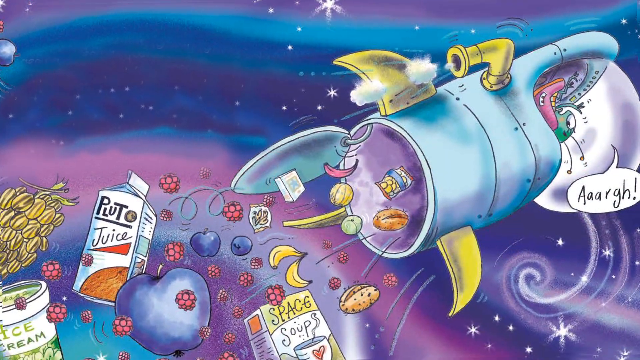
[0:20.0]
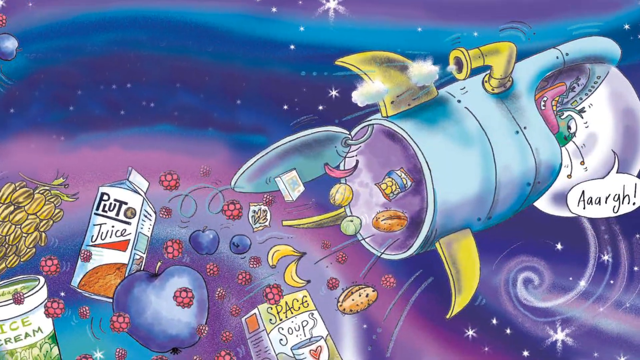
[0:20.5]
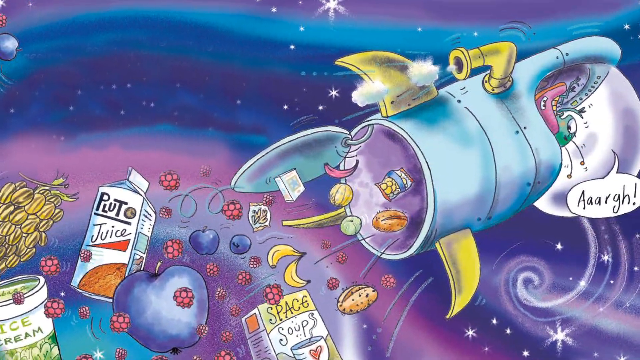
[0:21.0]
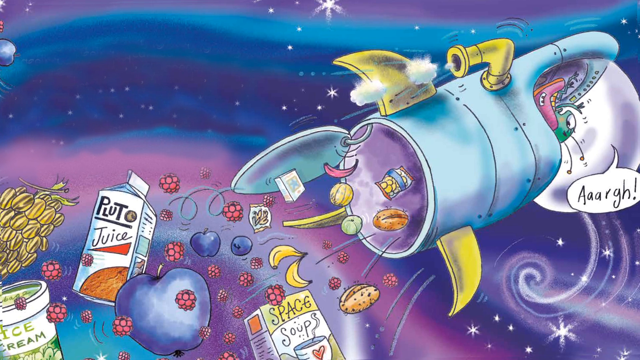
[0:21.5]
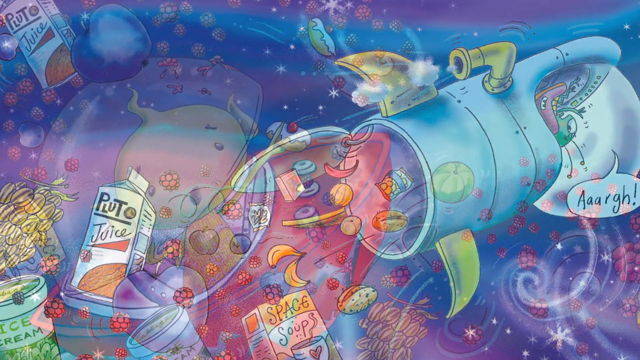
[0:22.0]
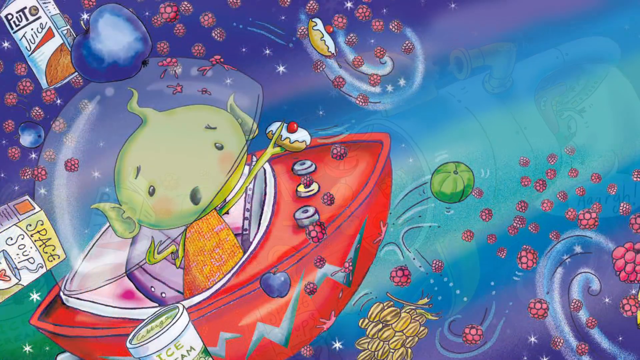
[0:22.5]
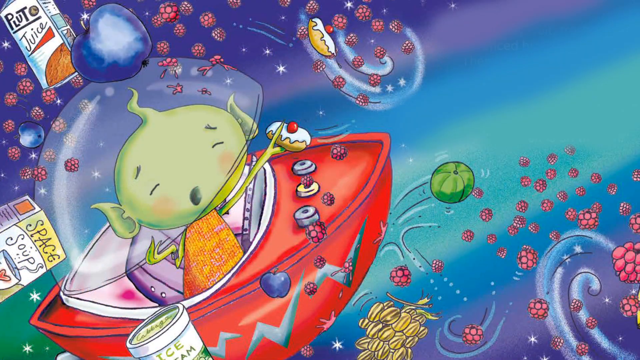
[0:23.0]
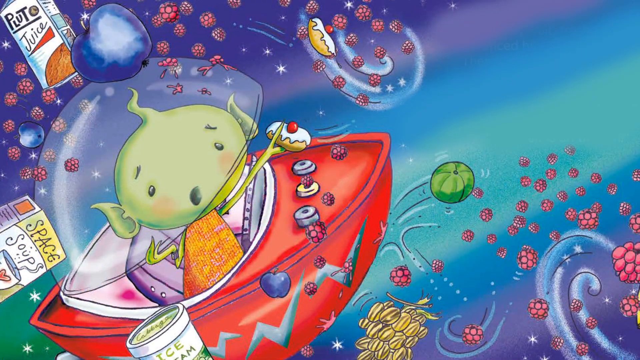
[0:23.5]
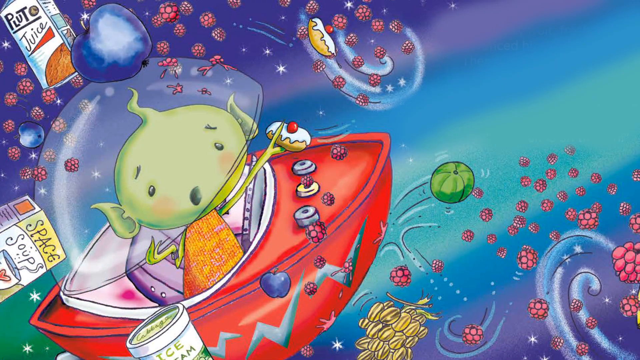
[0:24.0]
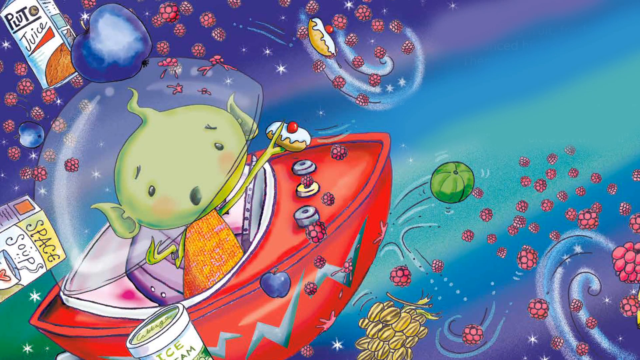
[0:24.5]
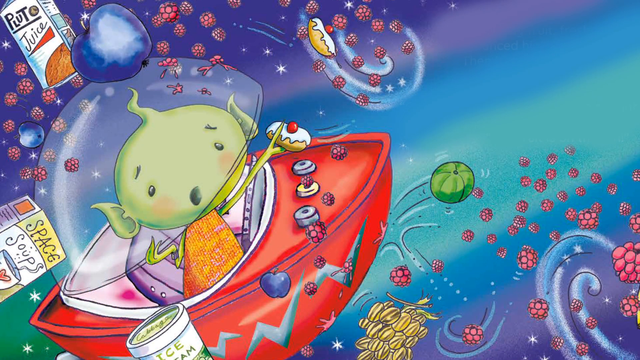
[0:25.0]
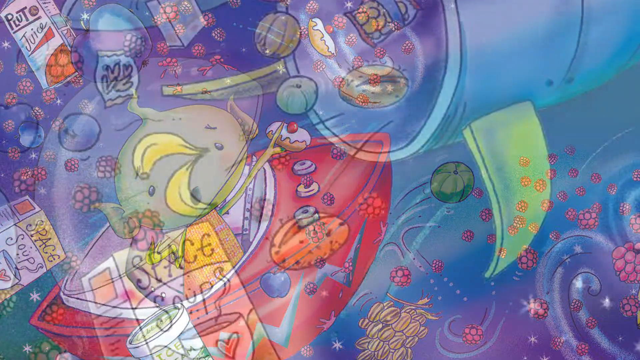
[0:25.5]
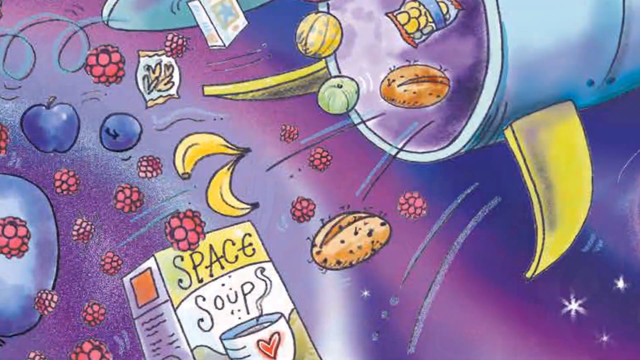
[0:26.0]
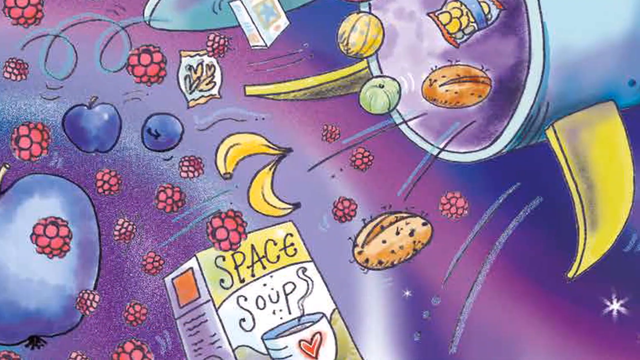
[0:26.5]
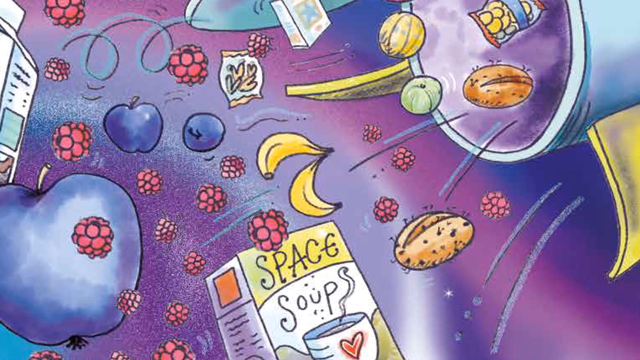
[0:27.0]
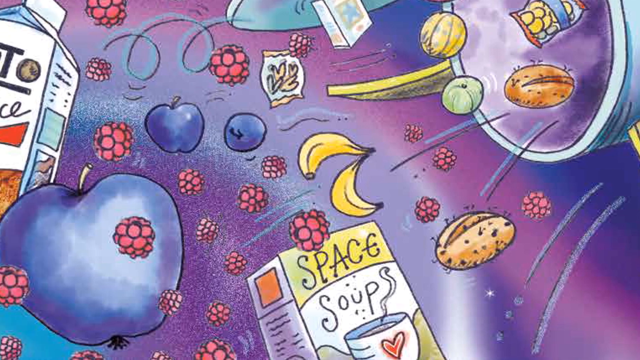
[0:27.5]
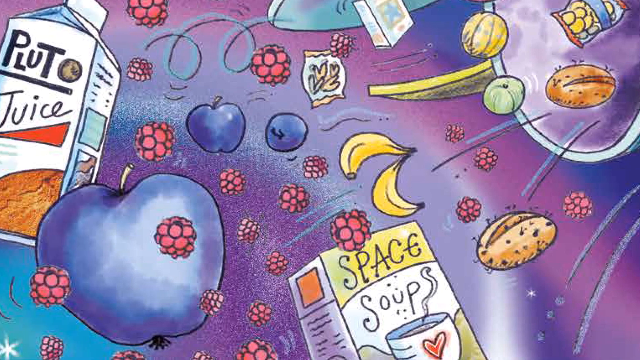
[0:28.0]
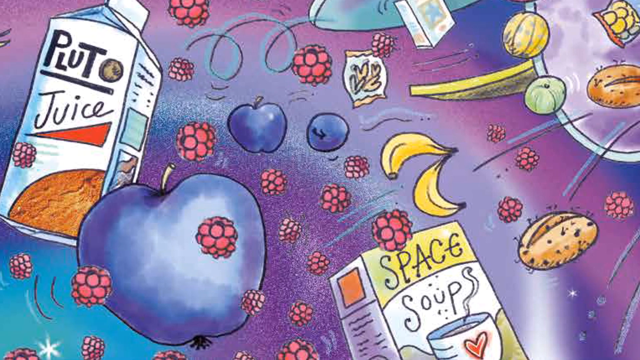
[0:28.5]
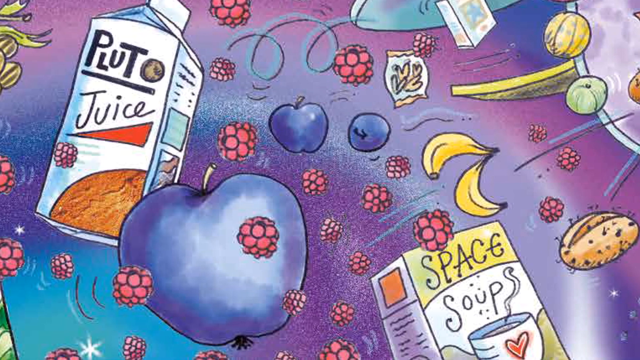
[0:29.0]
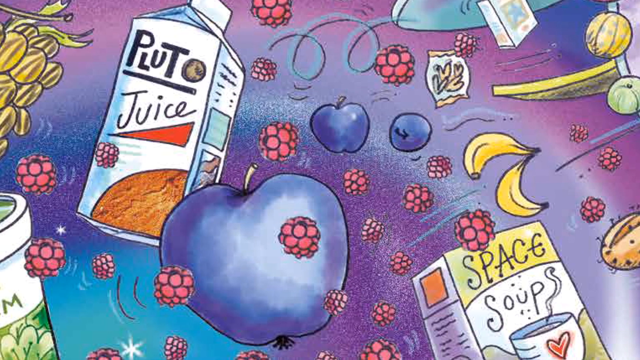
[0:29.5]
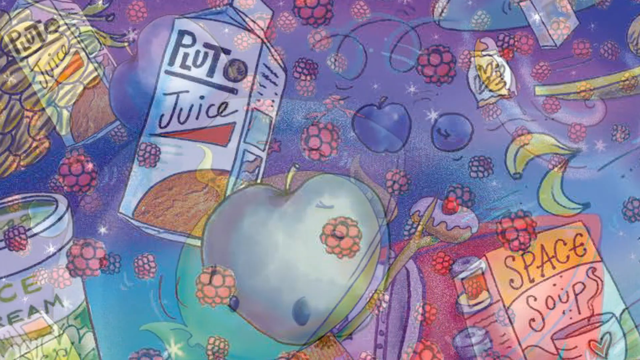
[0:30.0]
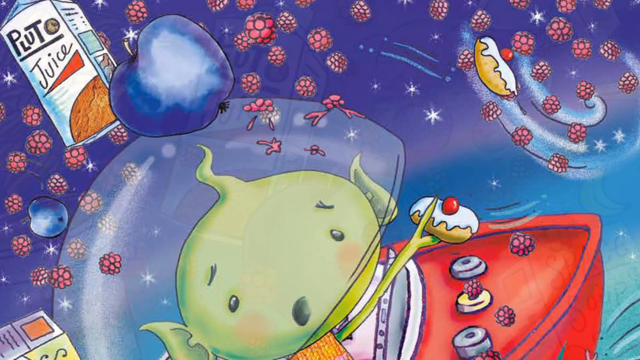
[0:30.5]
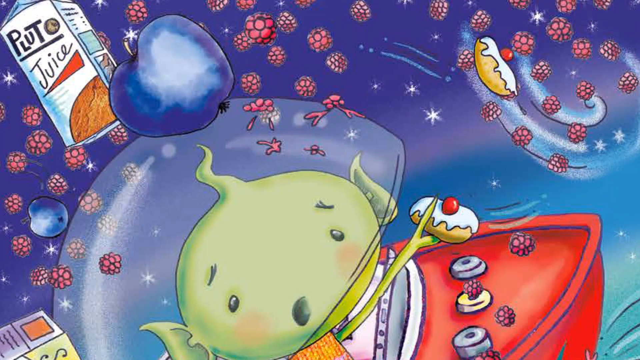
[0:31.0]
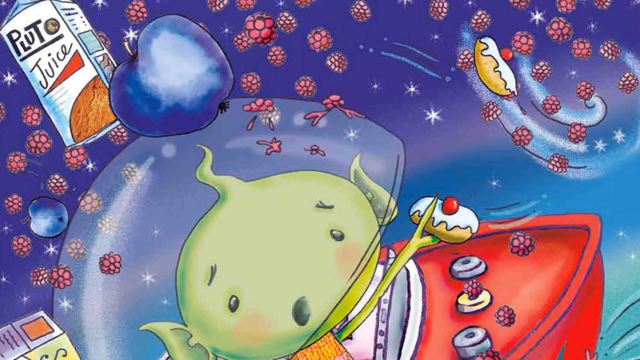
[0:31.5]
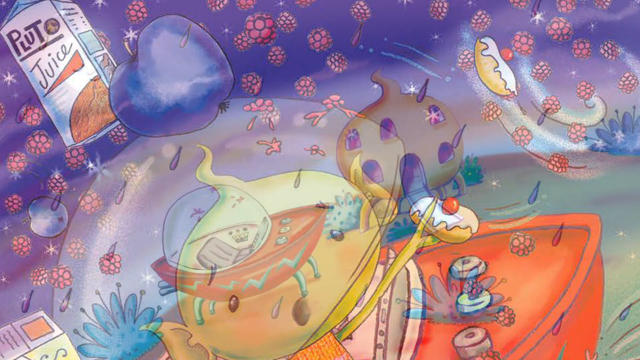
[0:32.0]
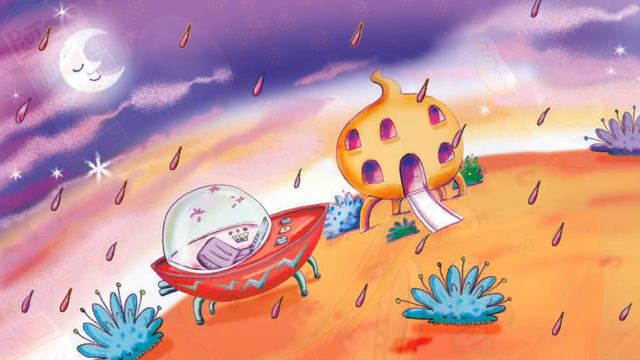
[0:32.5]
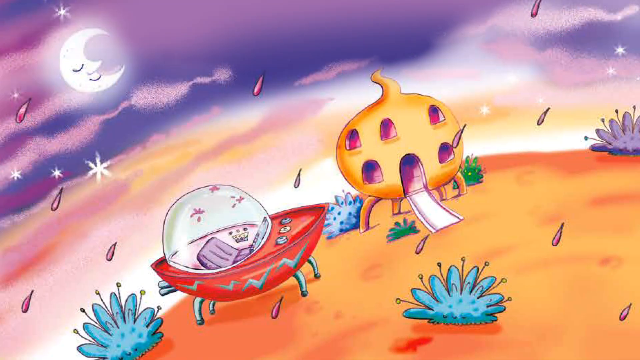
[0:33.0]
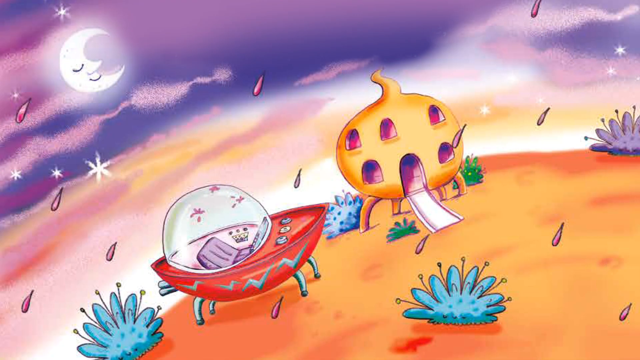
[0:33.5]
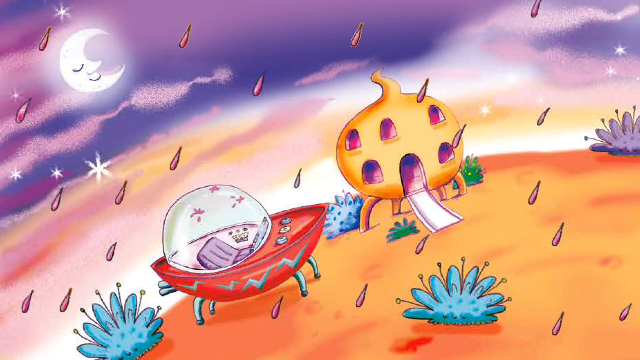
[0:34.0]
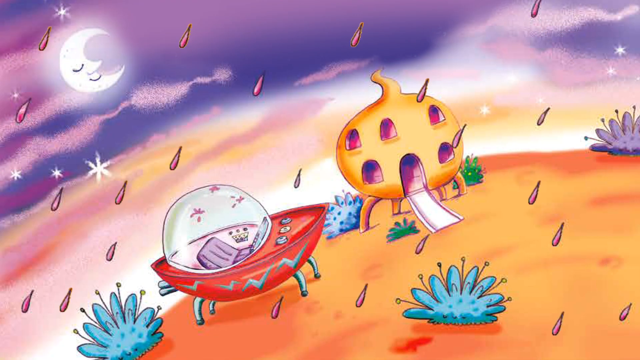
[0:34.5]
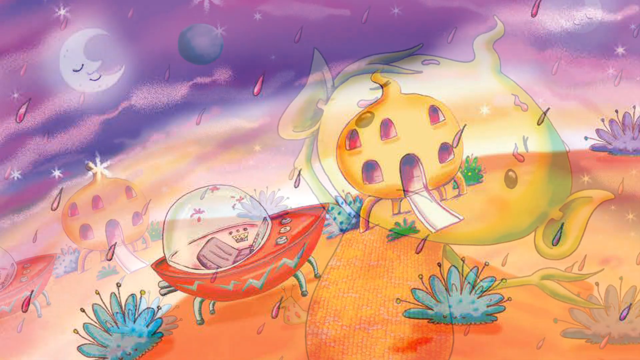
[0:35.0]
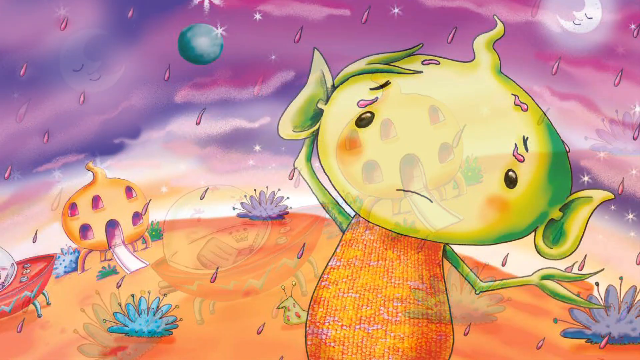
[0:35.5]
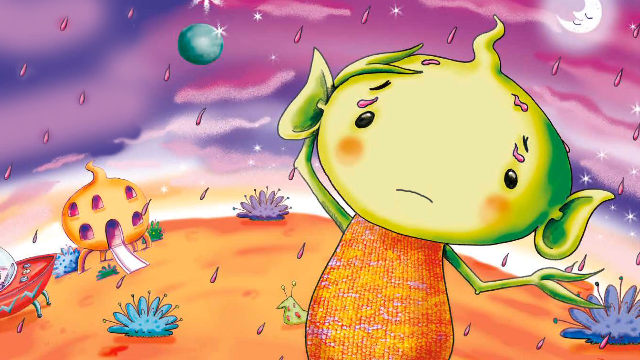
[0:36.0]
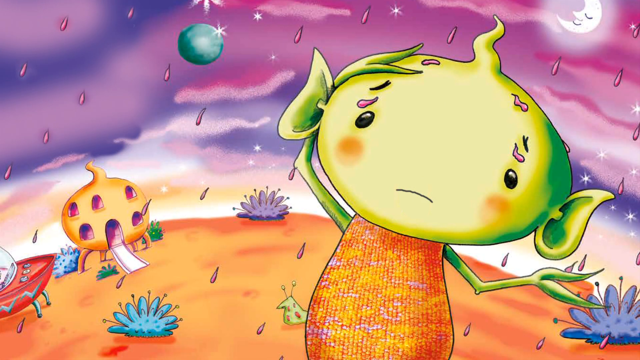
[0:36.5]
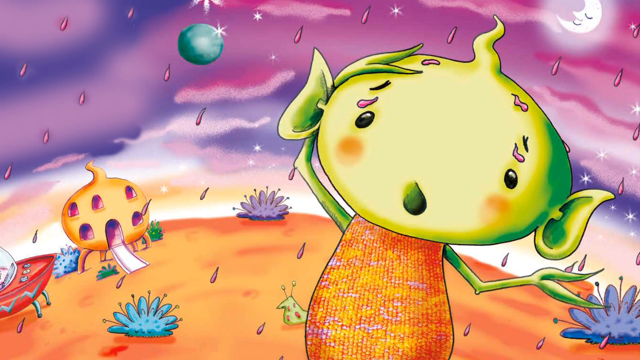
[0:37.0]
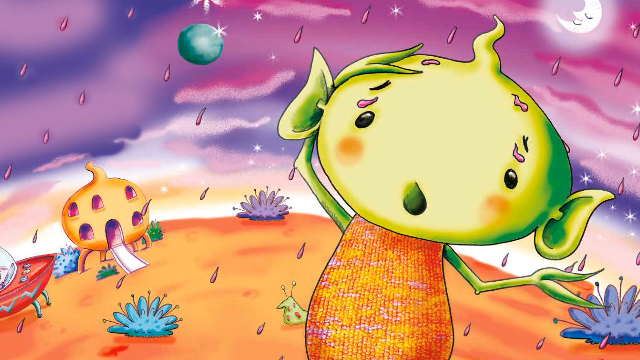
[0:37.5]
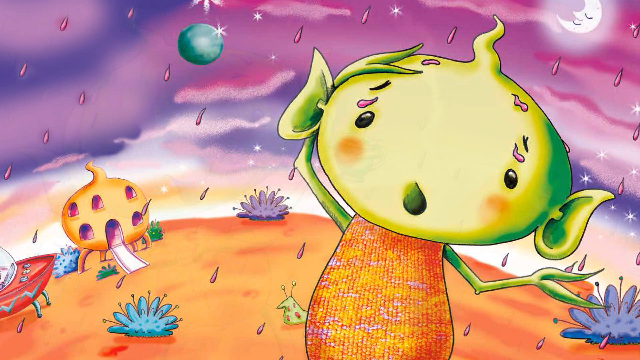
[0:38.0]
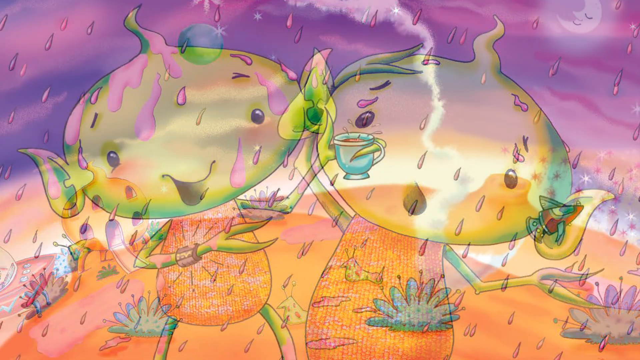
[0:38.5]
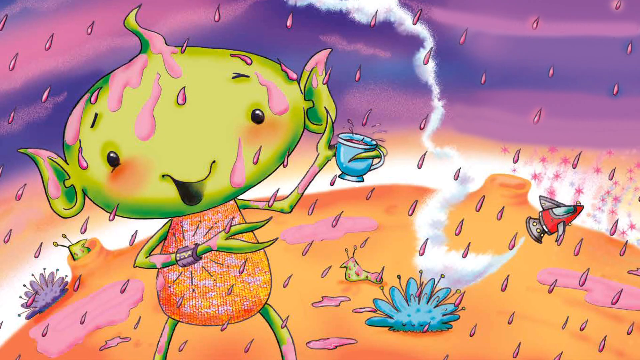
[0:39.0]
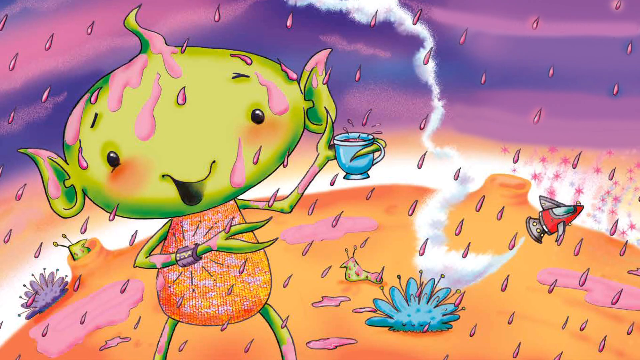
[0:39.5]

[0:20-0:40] The food appears to overflow out of the tunnel, a door flies open and all the food comes out, seemingly including some juice, some apple-like items and some raspberry-like fruit. Pink rain then appears to fall onto the terrain. The alien looks happy about the food coming and is shown floating in some kind of boat-like vehicle; he may have managed to get hold of some of the food. Some kind of pink liquid is raining down, and he appears to use a cup to catch the liquid falling from the sky. Rather than a tunnel, the object seems to be some kind of ship, and its back bursts open with food. Yellow drops also appear, of unclear origin.